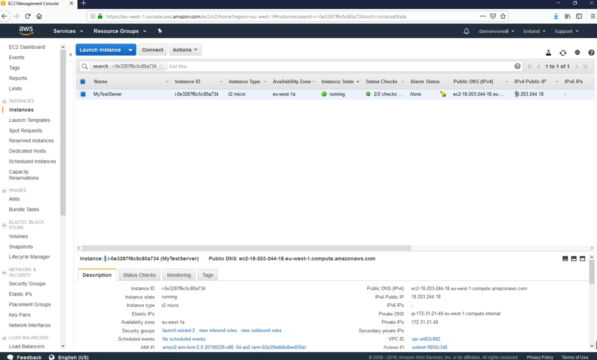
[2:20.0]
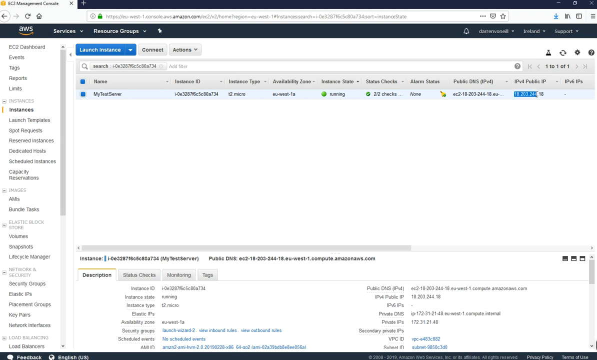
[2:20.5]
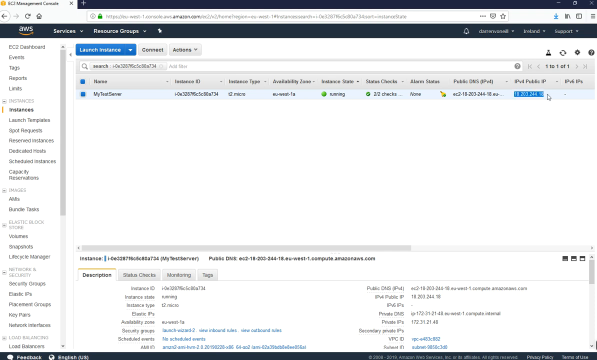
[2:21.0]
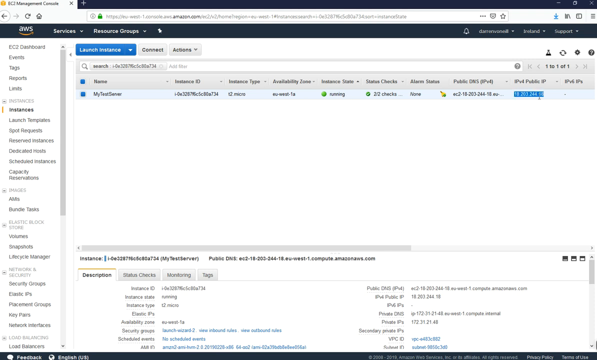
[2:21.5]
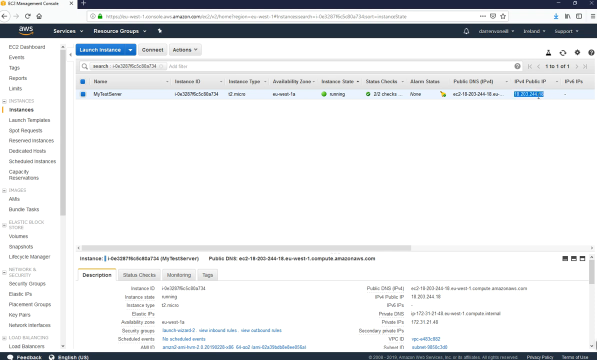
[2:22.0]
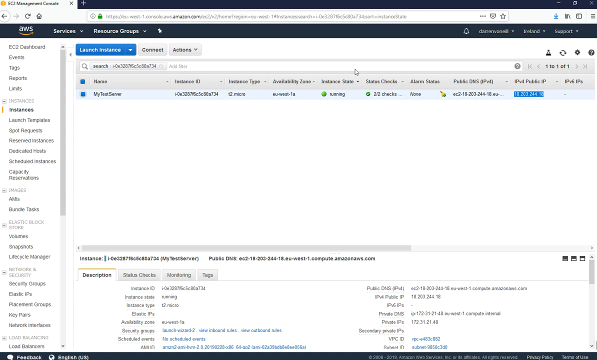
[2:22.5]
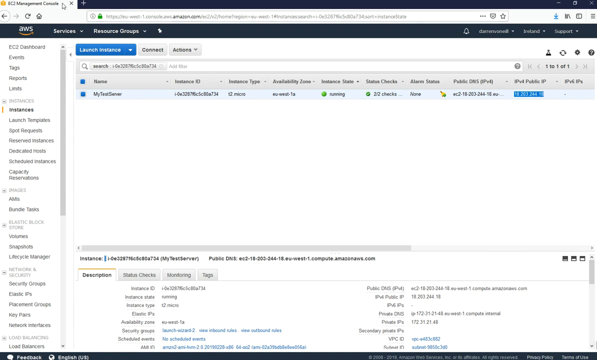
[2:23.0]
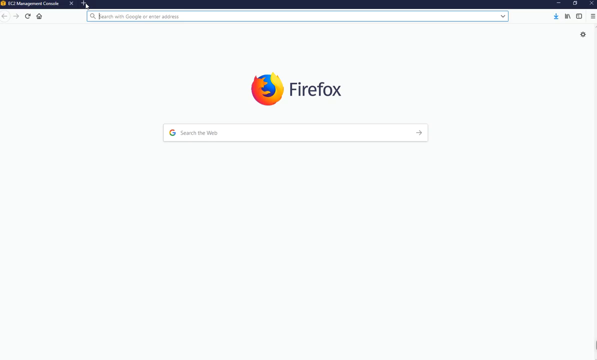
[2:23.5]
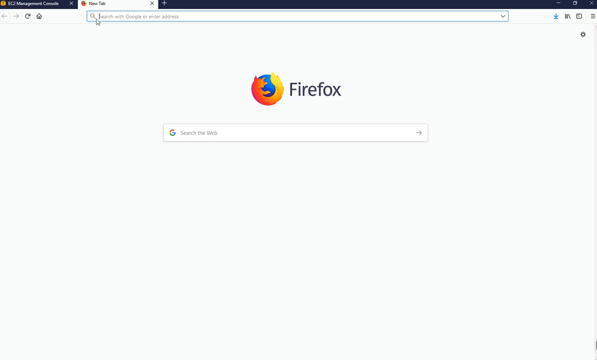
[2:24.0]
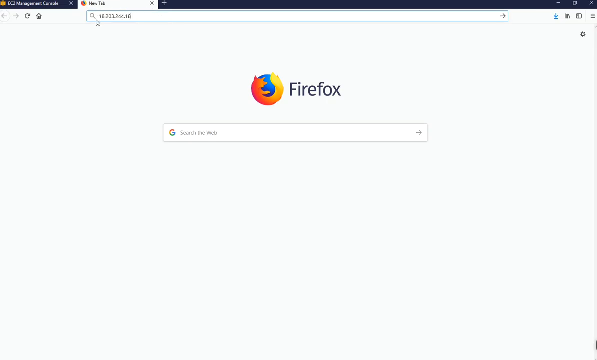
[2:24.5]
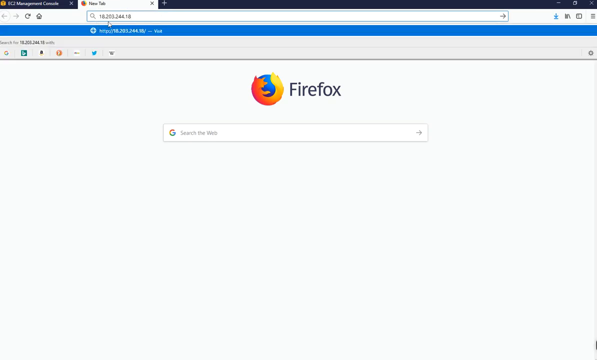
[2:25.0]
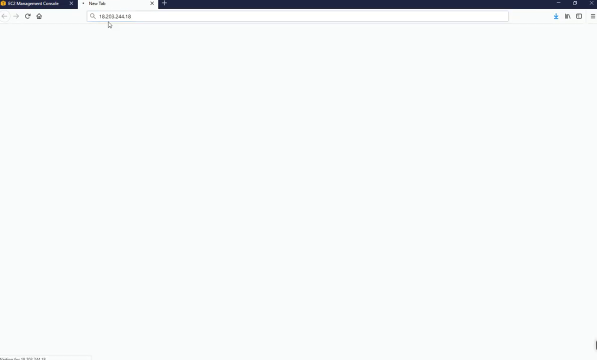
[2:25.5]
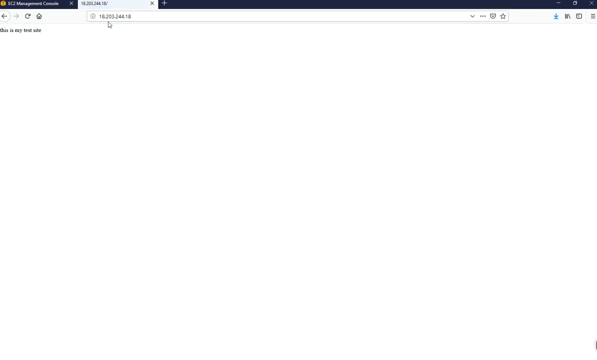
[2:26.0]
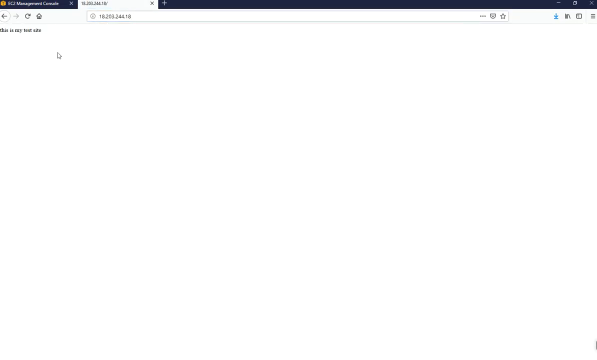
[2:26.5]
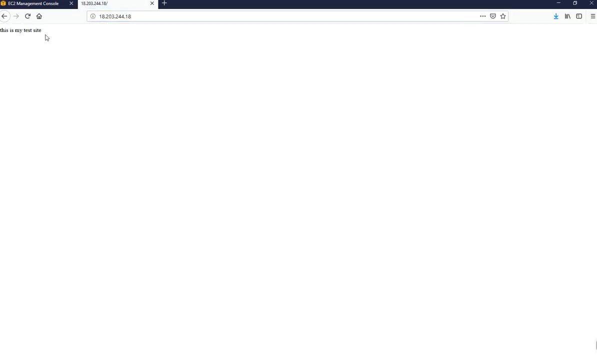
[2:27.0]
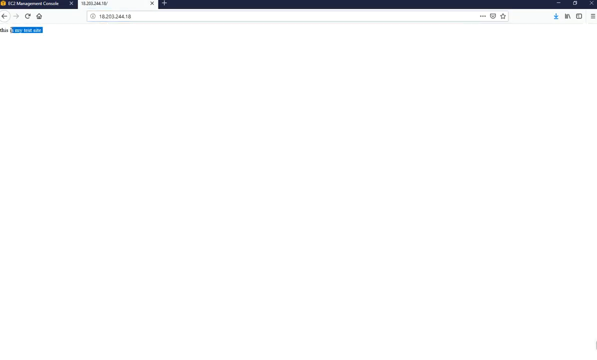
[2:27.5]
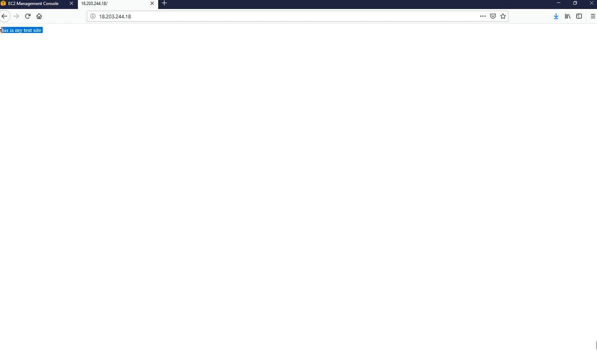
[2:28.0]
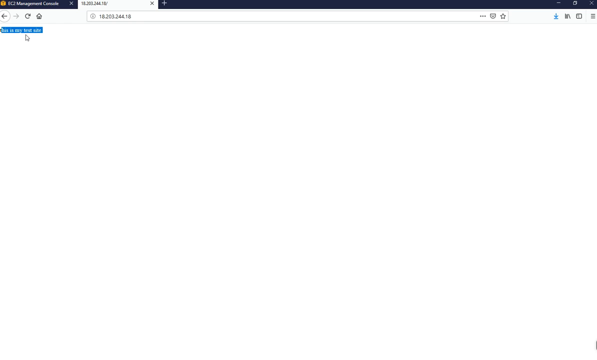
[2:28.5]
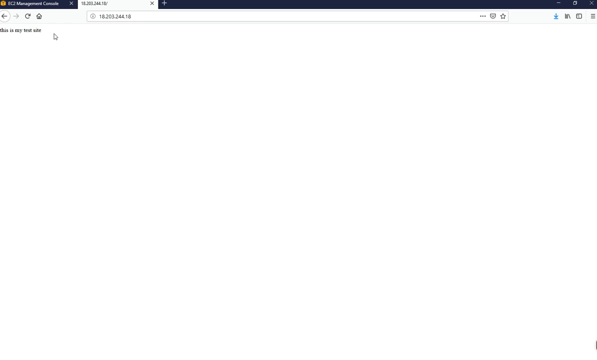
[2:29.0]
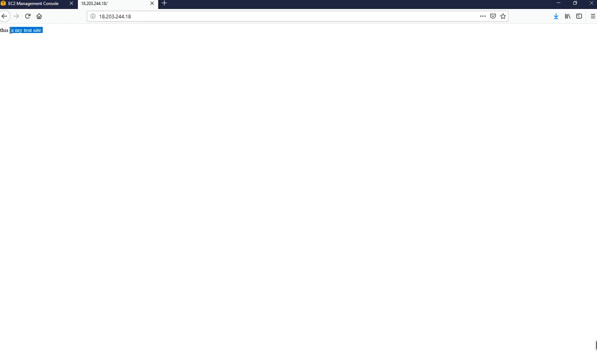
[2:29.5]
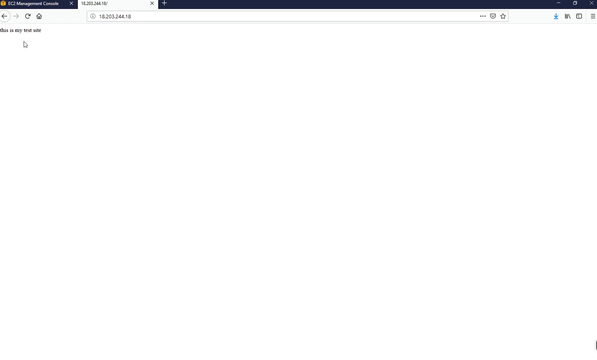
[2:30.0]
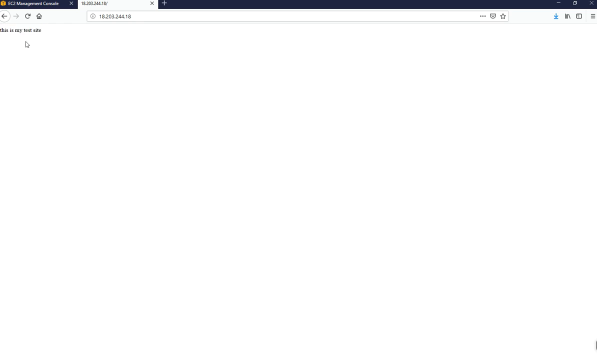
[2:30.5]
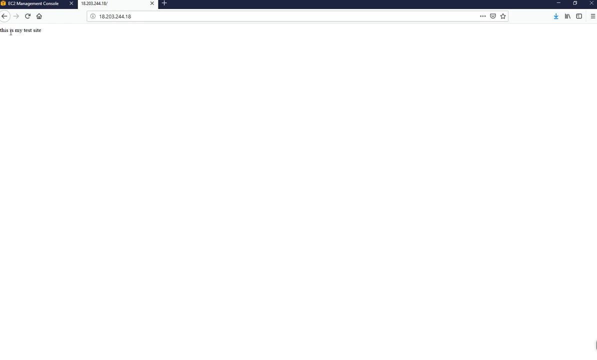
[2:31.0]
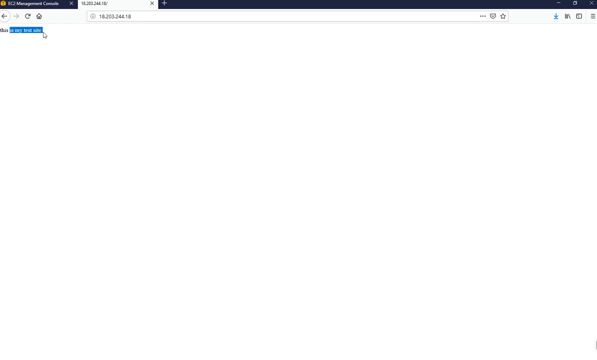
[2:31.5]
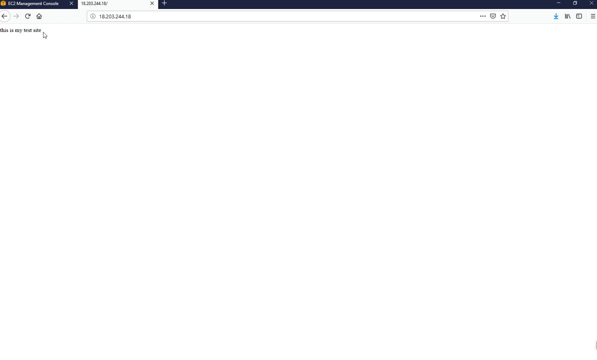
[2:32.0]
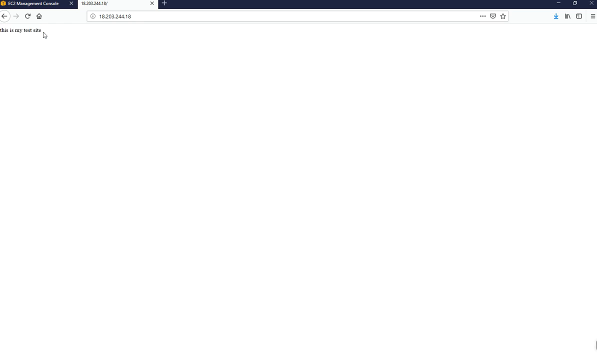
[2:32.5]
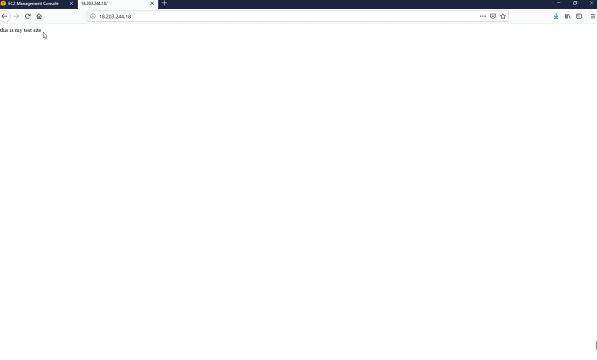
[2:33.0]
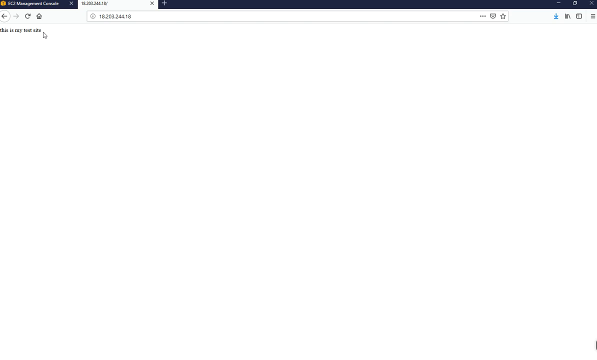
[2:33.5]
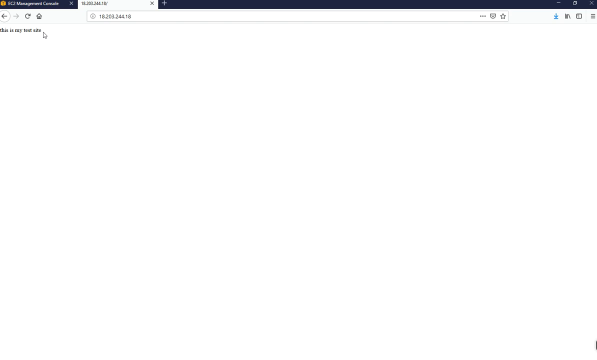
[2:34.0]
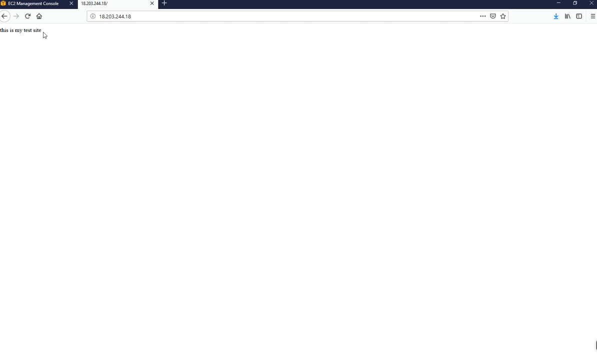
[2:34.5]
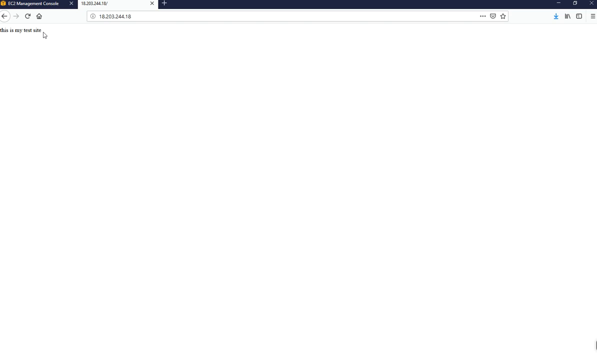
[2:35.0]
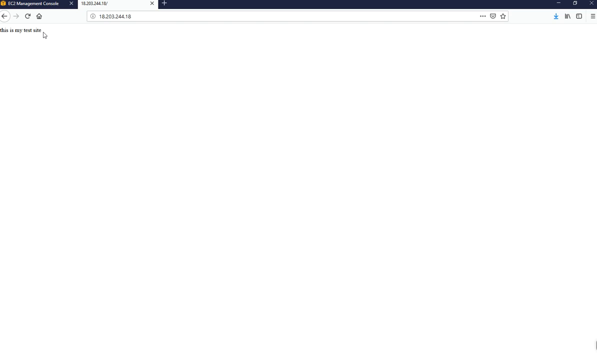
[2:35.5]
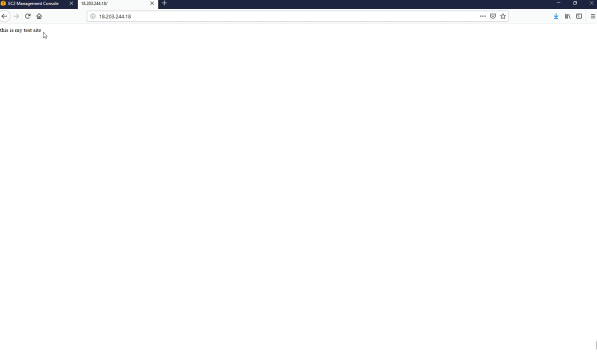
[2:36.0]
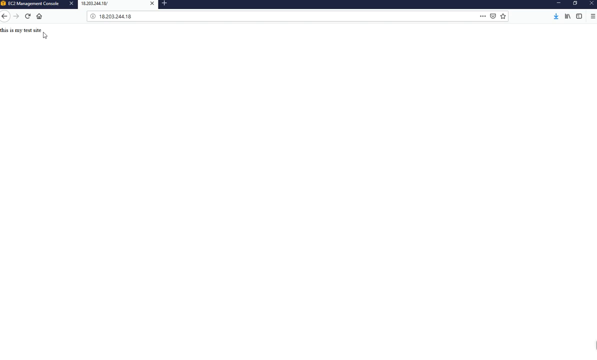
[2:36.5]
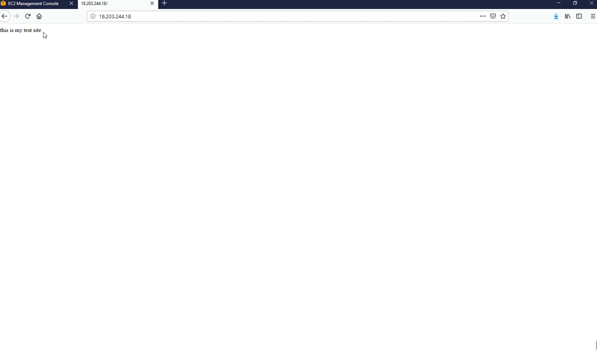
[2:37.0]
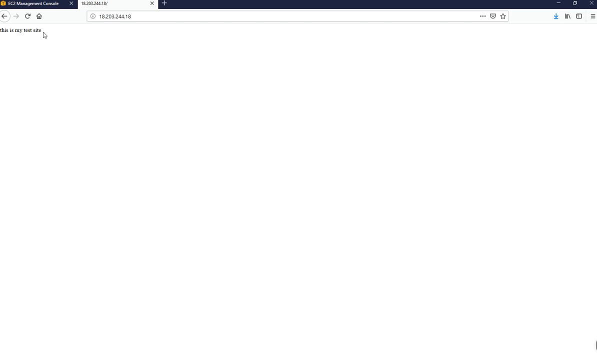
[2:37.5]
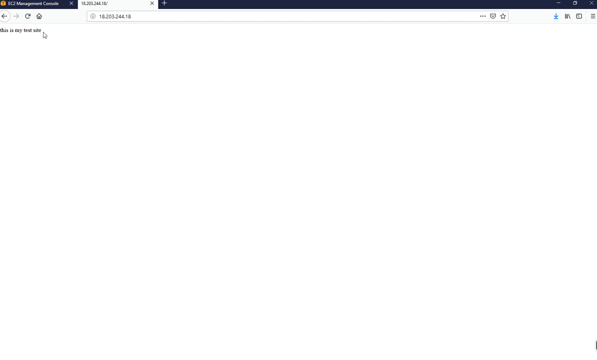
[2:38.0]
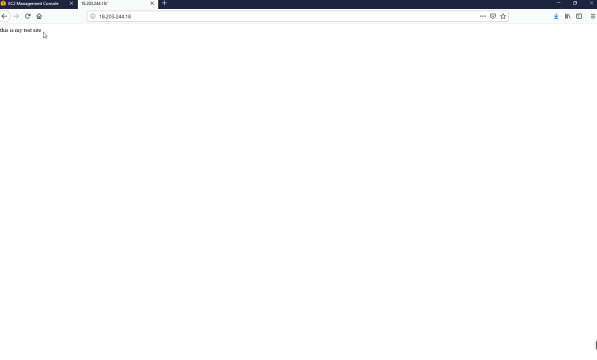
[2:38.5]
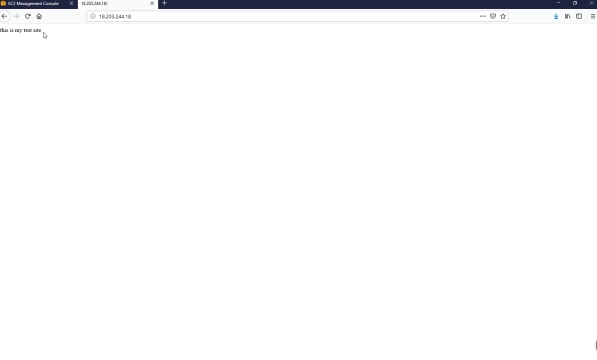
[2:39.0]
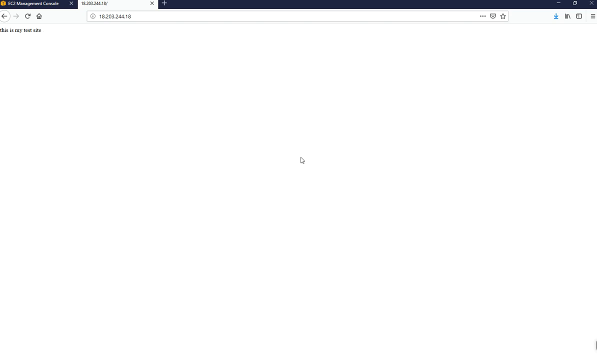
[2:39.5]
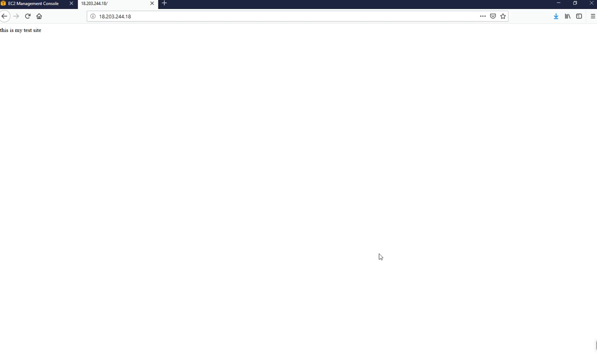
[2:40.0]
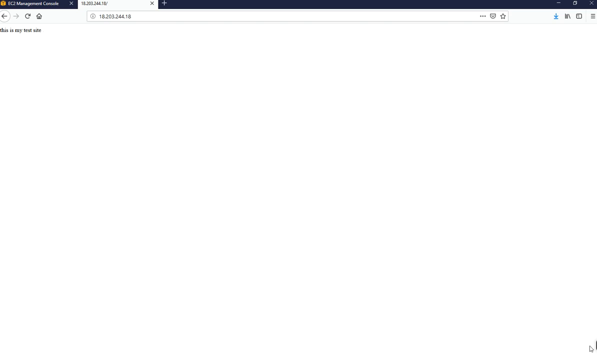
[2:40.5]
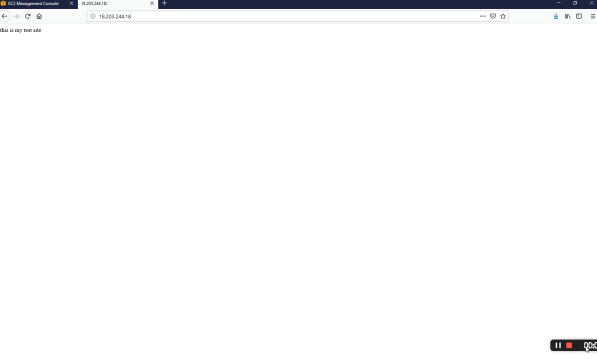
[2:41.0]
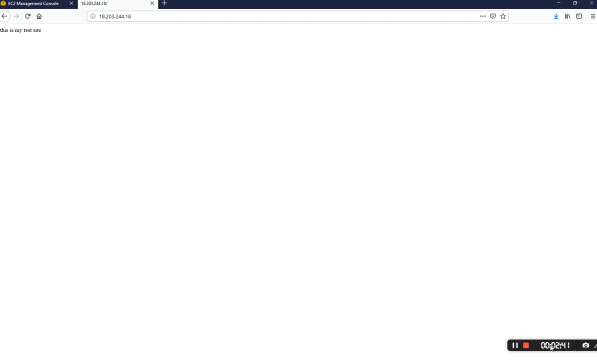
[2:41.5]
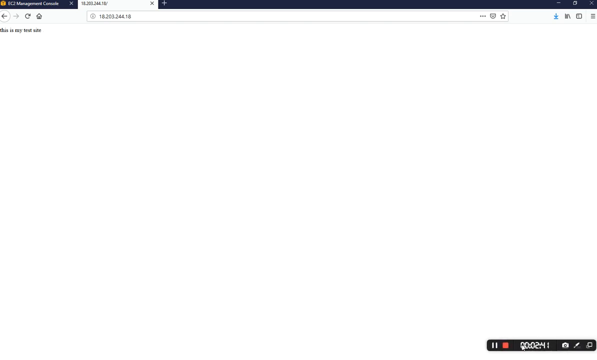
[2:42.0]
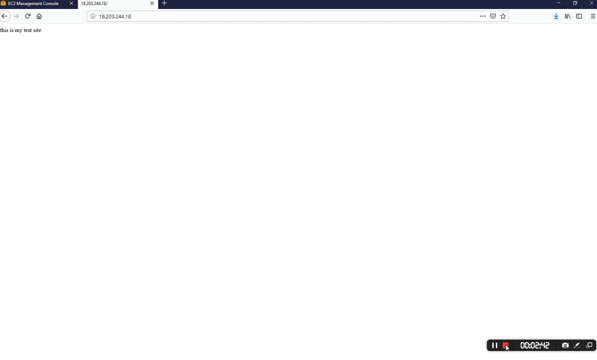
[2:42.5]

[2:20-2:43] A webpage for AWS has two tabs on the top bar, one for services and one for resource groups, with drop down arrows next to them. The page is for launch instance, with a drop-down box for actions to its right and a search bar beneath it. There are two sections with entries in small black text that is too small to read. At the bottom right of the page is a timer at 2 minutes and 12 seconds, with a Pause button, a Stop button, a Home button, and what appears to be a Settings button. The cursor moves up to the second section from the top, highlights the last entry to the right, and enters it into a search bar in a new tab. This brings up a search the web box for Google Chrome, though the tab is for Firefox, with that logo in the middle of the page above the search box. The cursor highlights a bit of text in the upper left corner, and then the timer is brought out and stopped from the bottom right corner.